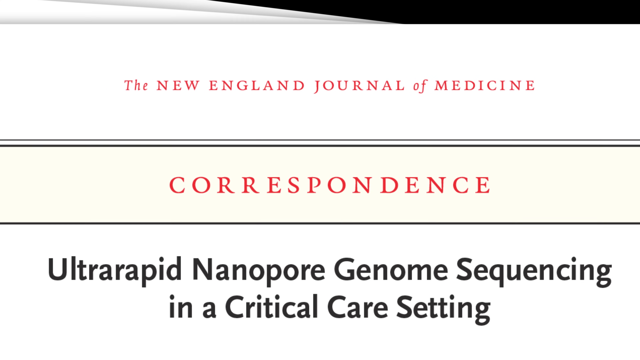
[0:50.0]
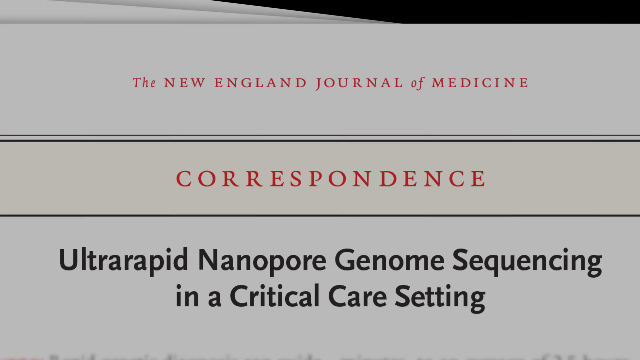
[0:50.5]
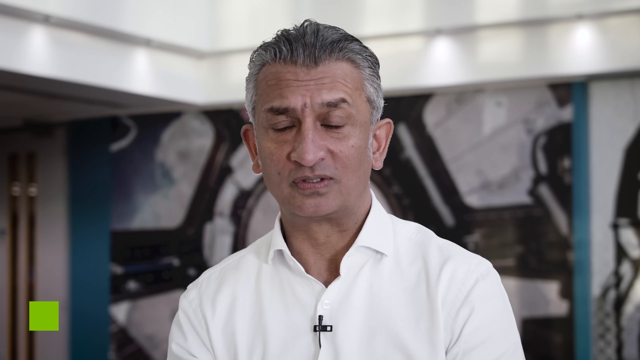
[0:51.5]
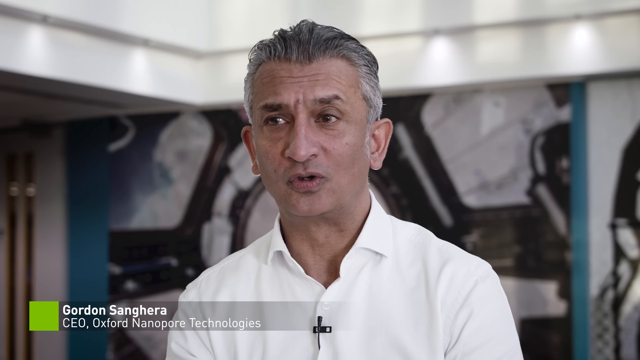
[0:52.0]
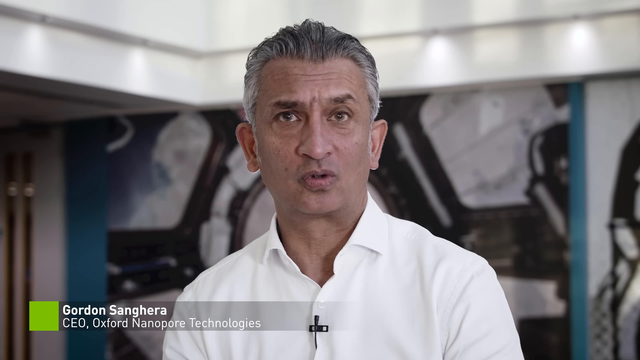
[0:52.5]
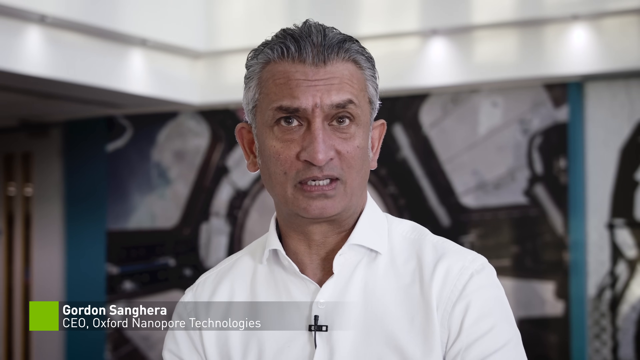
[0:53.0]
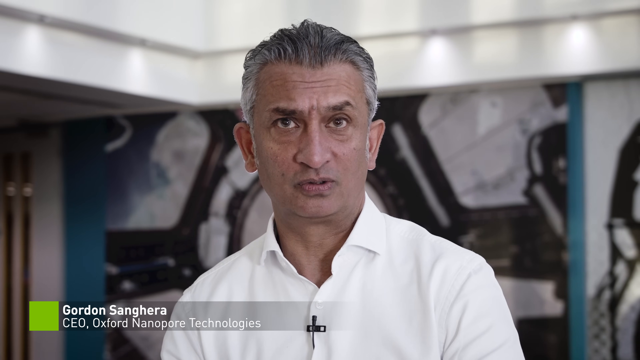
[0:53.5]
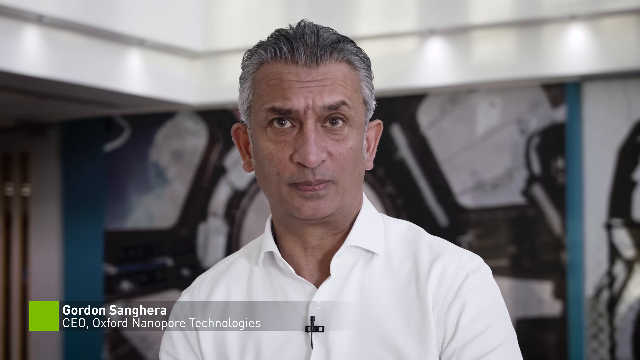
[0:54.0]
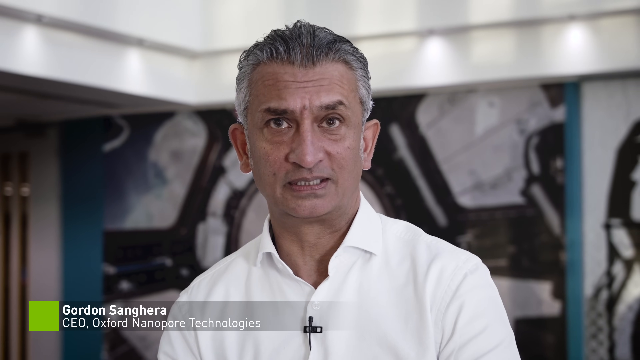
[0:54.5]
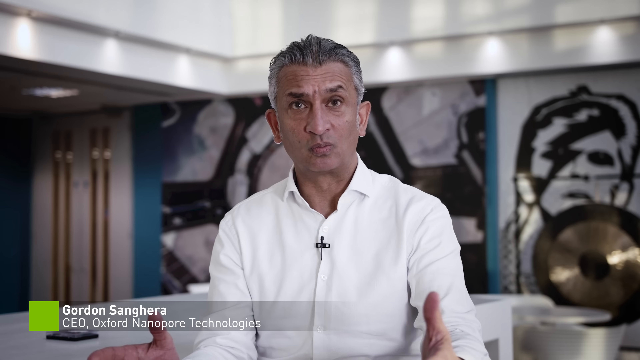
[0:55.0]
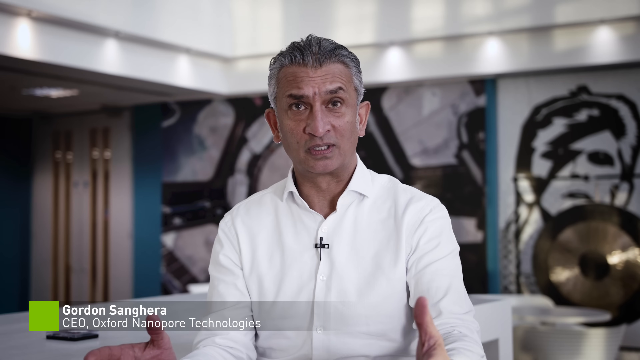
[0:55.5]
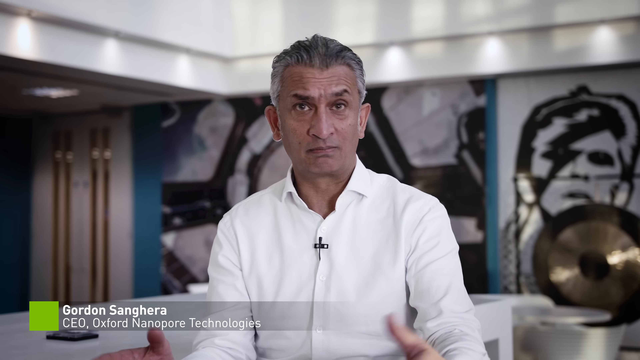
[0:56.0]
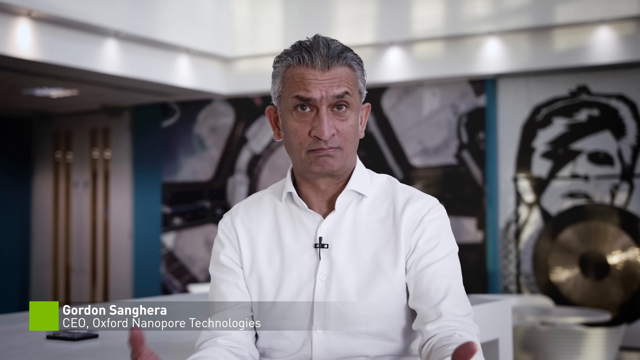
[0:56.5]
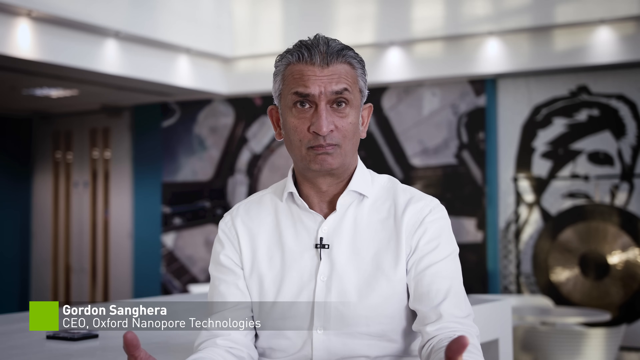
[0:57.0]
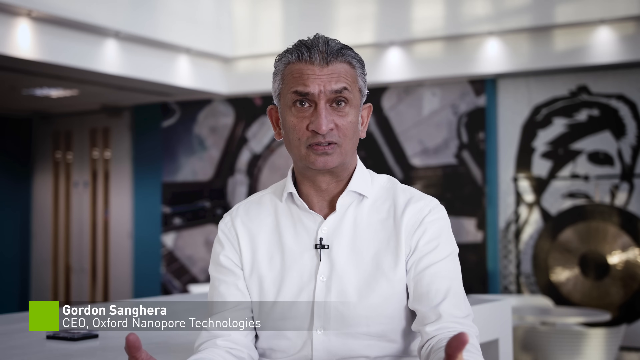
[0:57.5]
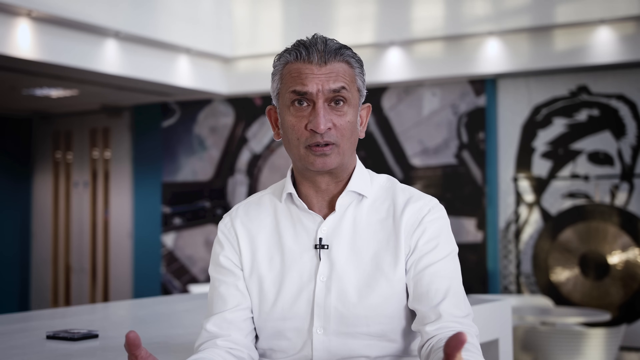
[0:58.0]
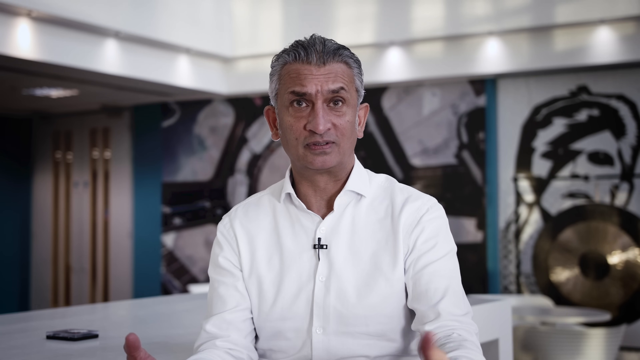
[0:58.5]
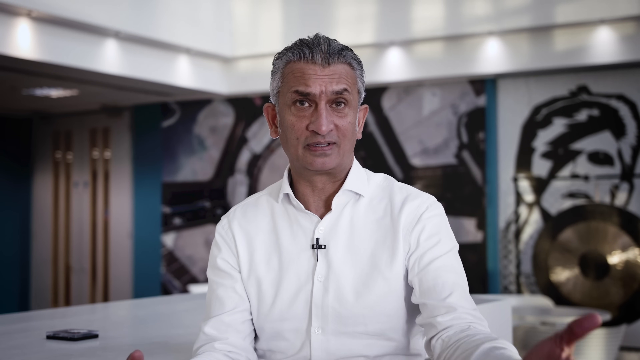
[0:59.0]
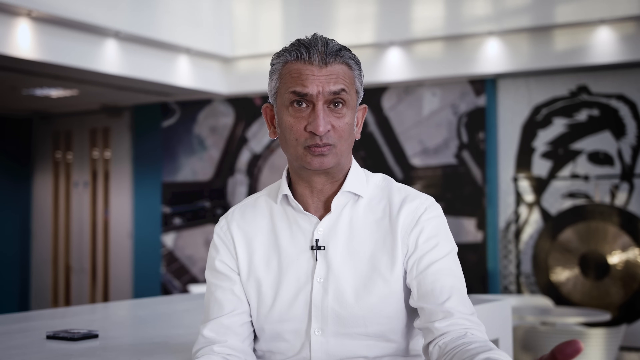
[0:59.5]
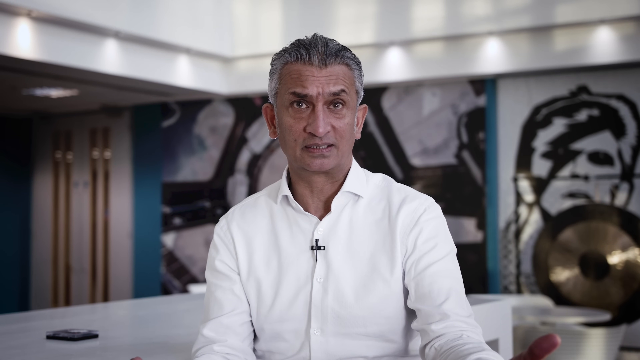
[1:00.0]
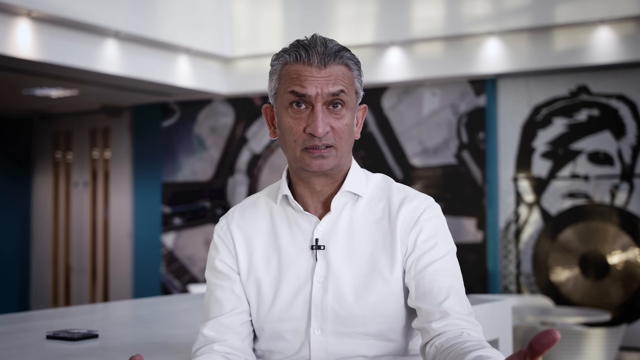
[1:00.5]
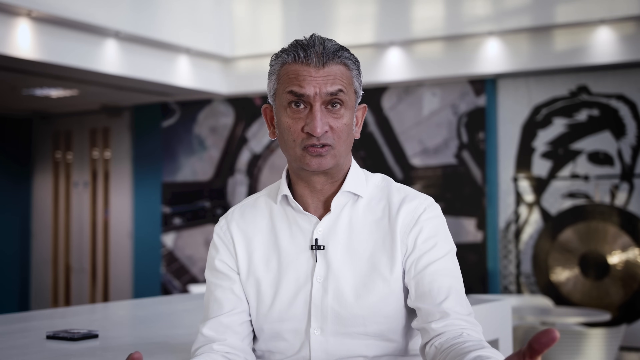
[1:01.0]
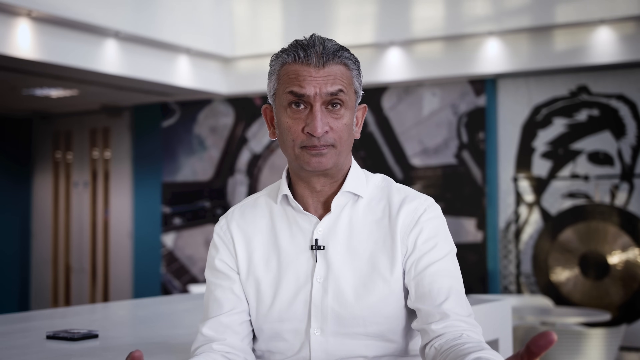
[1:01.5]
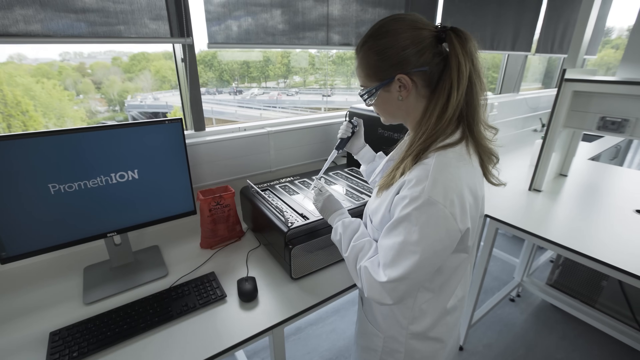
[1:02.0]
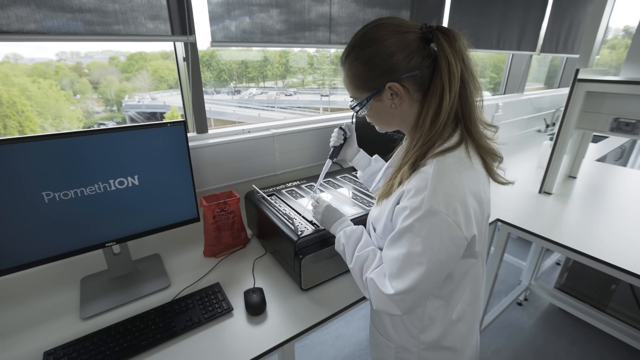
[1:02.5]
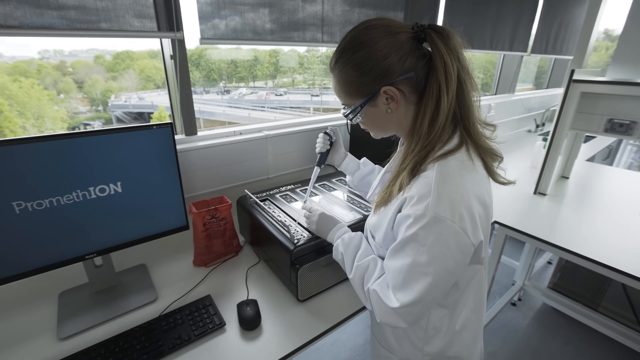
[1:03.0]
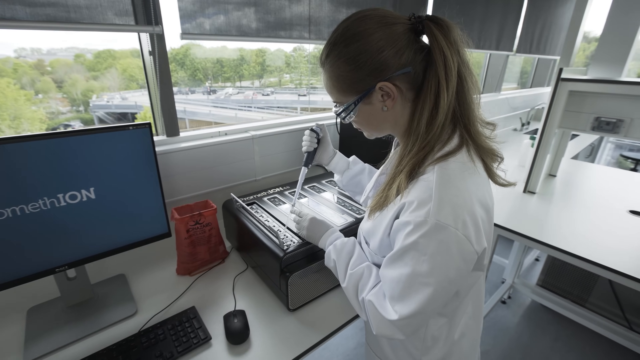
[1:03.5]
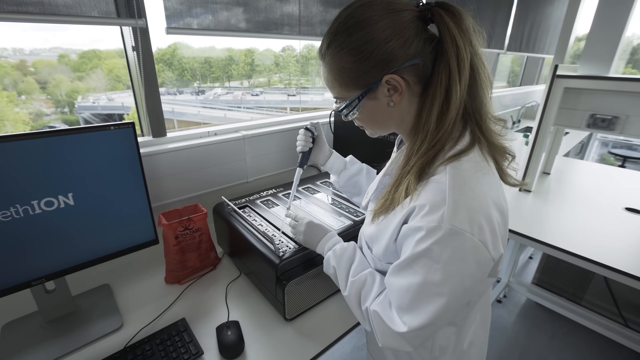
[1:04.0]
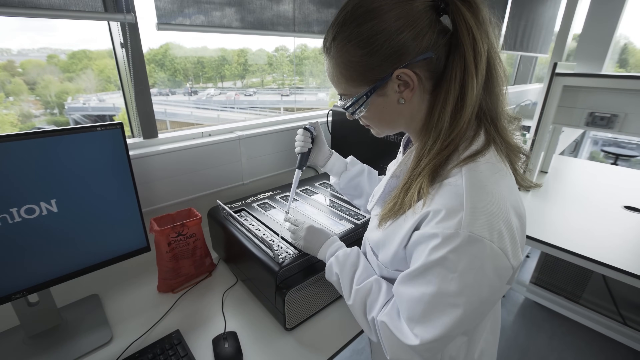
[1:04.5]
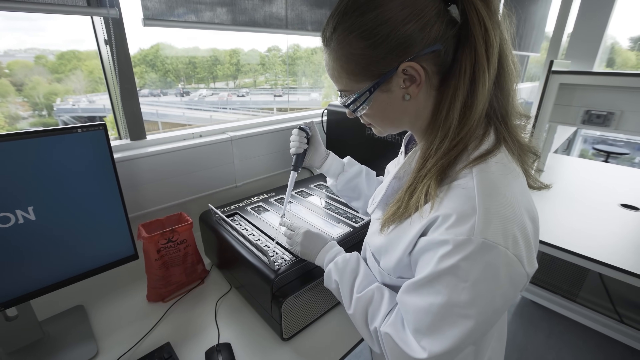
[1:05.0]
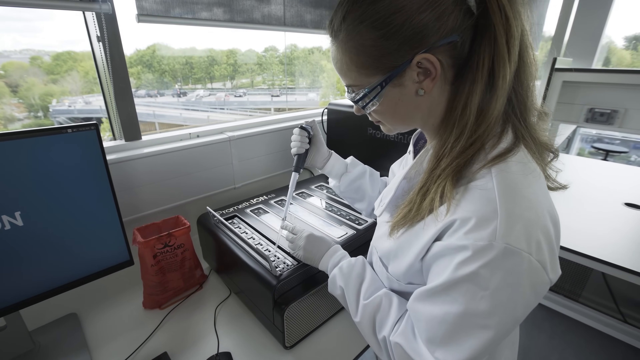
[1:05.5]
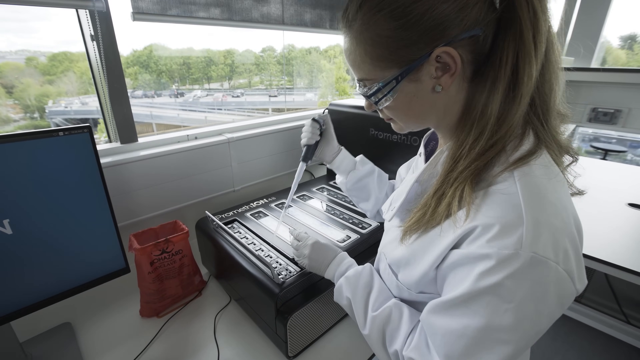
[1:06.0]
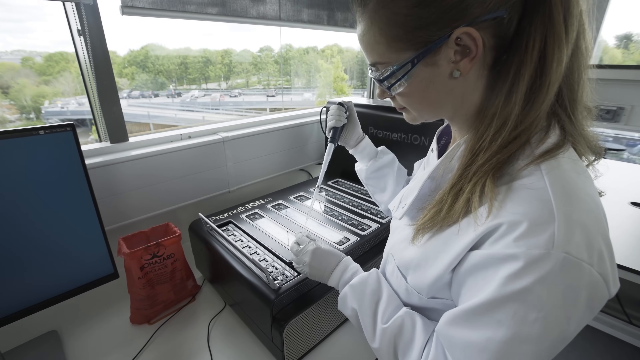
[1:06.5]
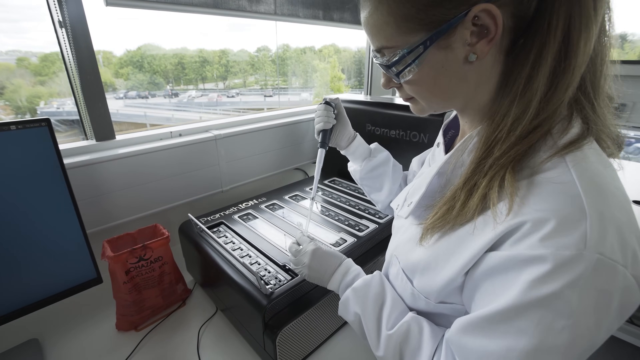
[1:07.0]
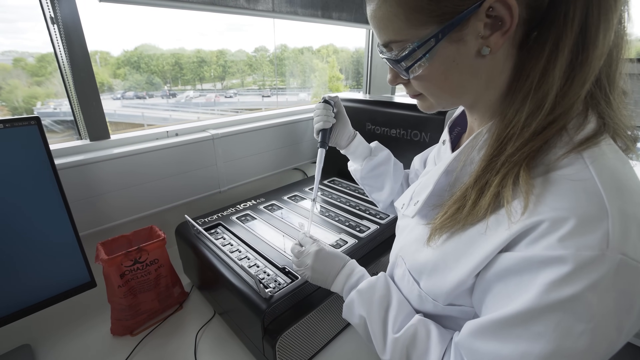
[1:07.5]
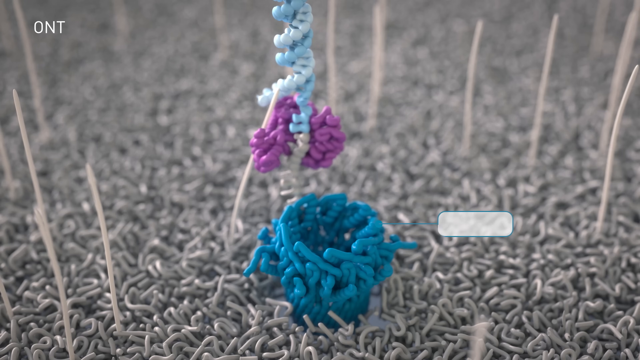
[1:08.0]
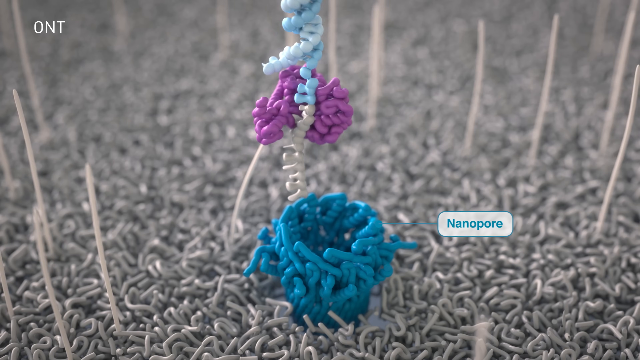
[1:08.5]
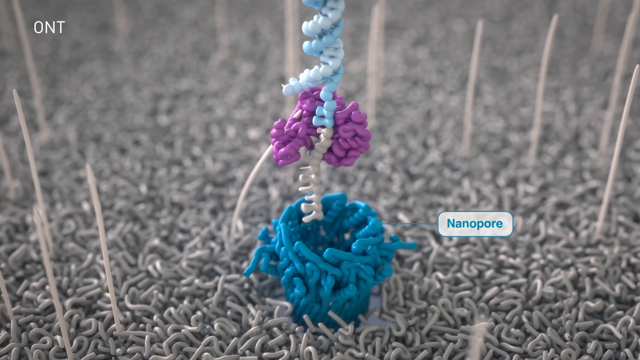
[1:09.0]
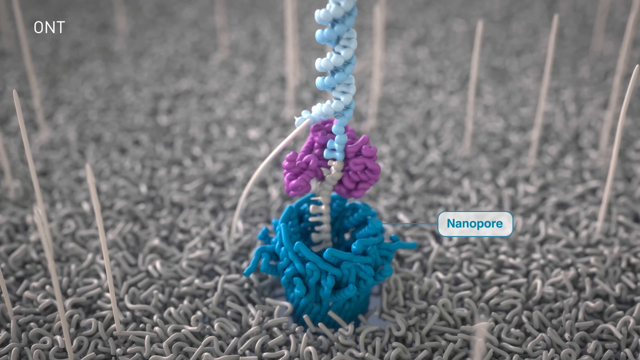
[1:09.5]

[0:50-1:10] The paper reads "the New England Journal of Medicine correspondence ultra rapid nanopore genome sequencing in a critical care setting." Next, a man appears with the text "CEO Oxford nanopore technologies"; his name is Gordon Senghera. He appears to be possibly Indian and looks to be in his 50s, clean shaven, with salt-and-pepper, medium-length hair and a white shirt. Behind him, off to the right, is a black-and-white picture of David Bowie; below that is what looks like a symbol like on a drum set, and to the left of that is what looks to be the inside of the International Space Station. Then a white woman with brown hair, wearing safety goggles, pipes some liquid into some test tubes. To the left of her is a computer whose monitor has a blue screen reading "PROMETHEON."